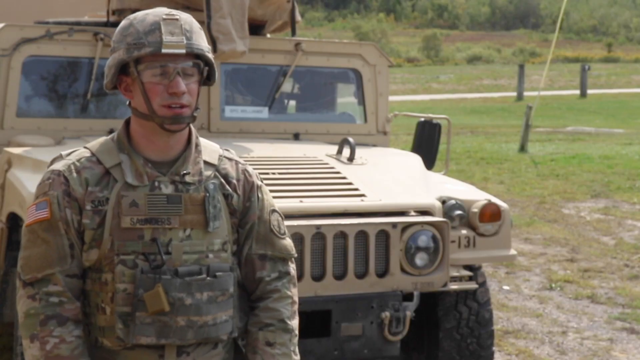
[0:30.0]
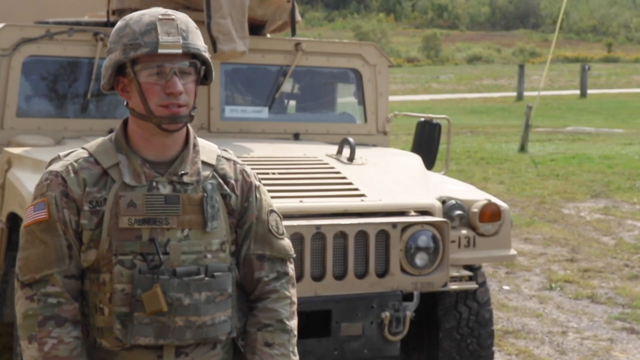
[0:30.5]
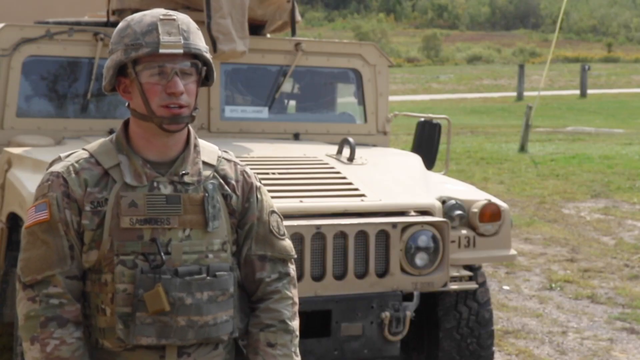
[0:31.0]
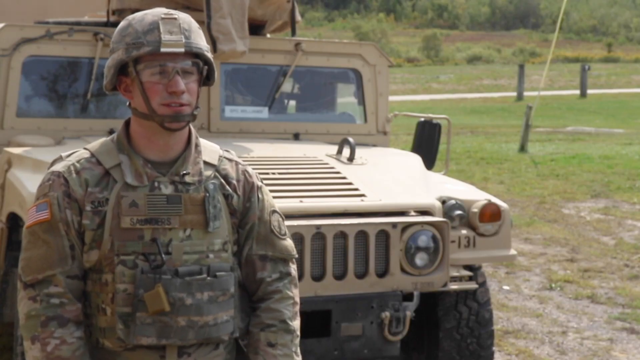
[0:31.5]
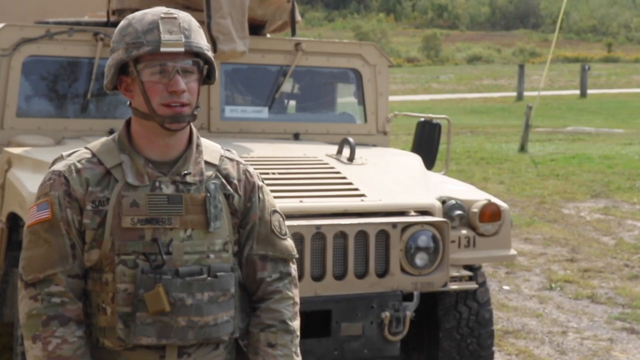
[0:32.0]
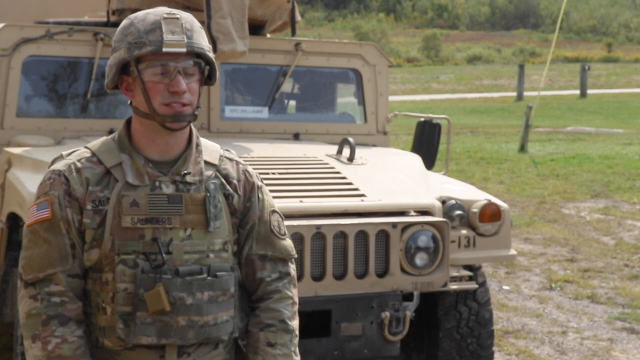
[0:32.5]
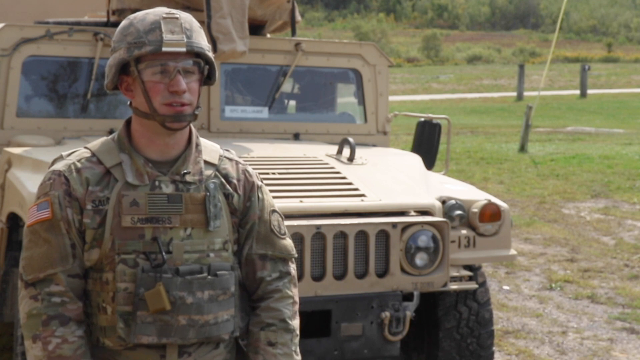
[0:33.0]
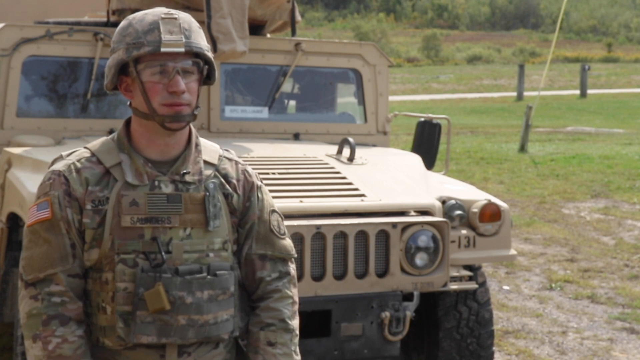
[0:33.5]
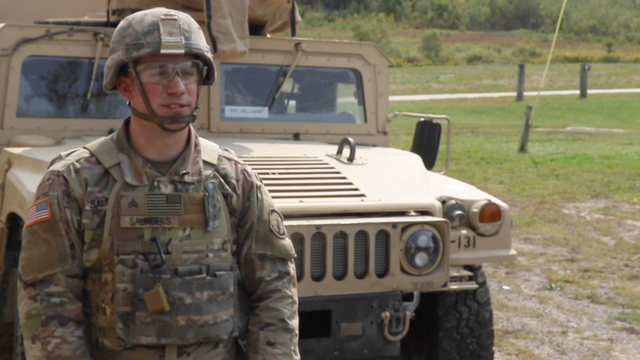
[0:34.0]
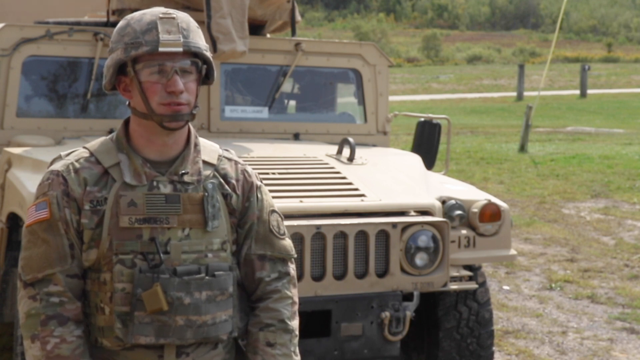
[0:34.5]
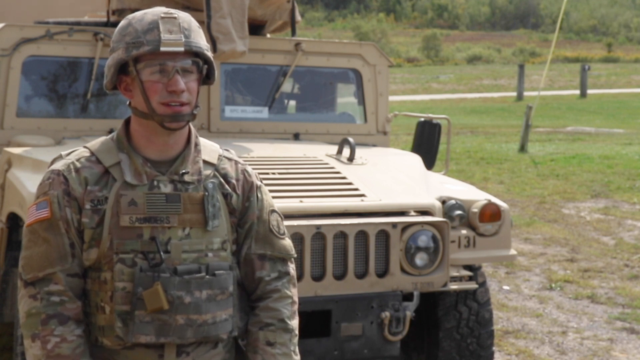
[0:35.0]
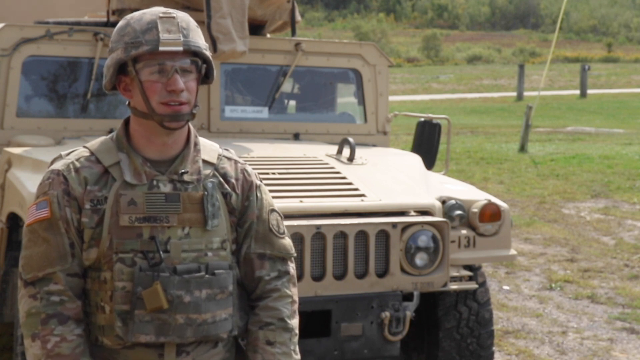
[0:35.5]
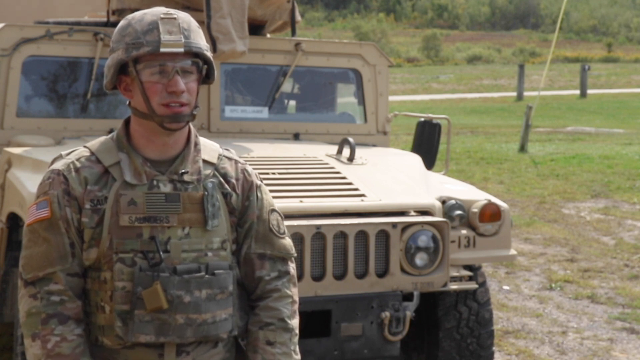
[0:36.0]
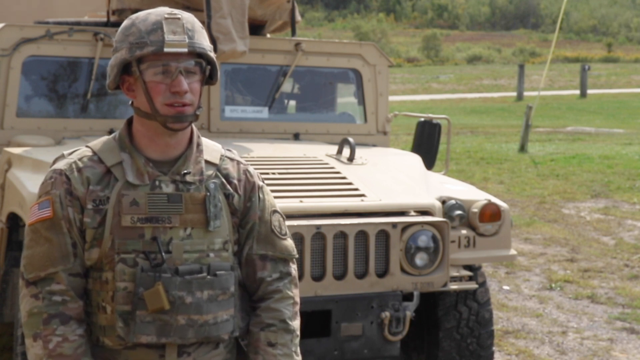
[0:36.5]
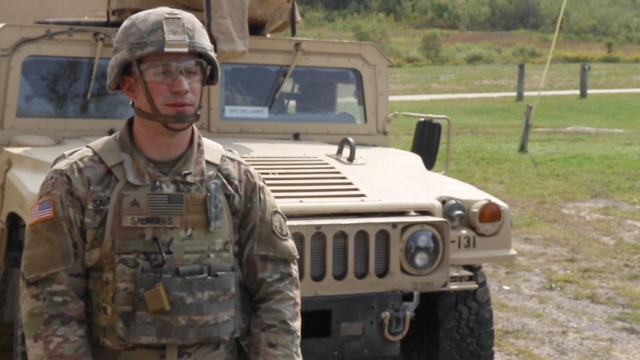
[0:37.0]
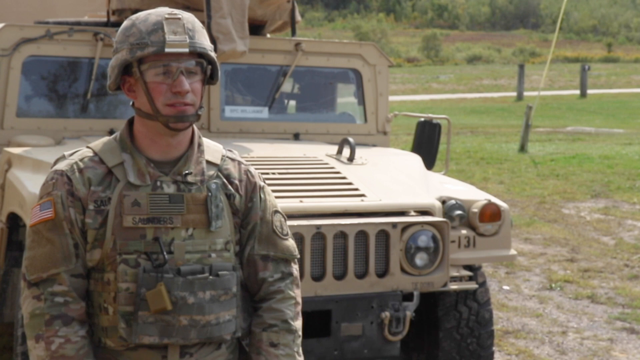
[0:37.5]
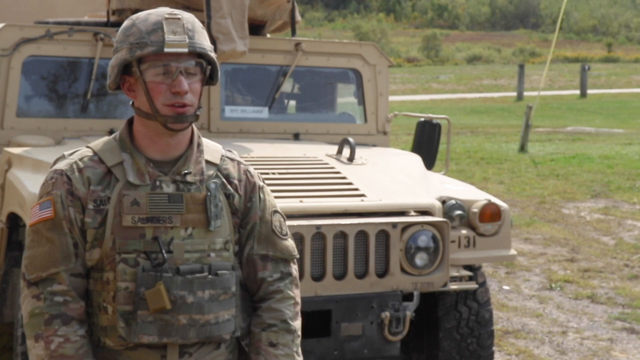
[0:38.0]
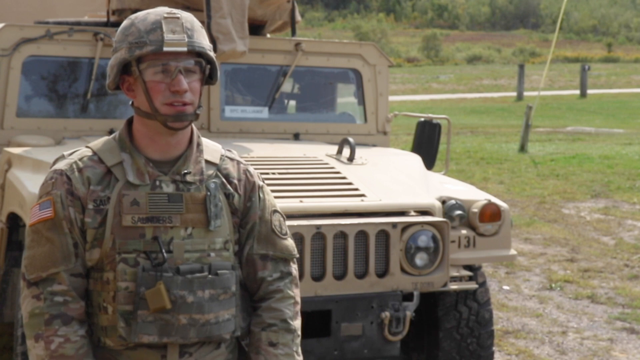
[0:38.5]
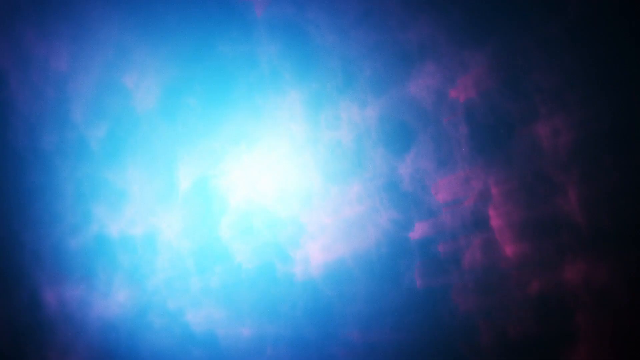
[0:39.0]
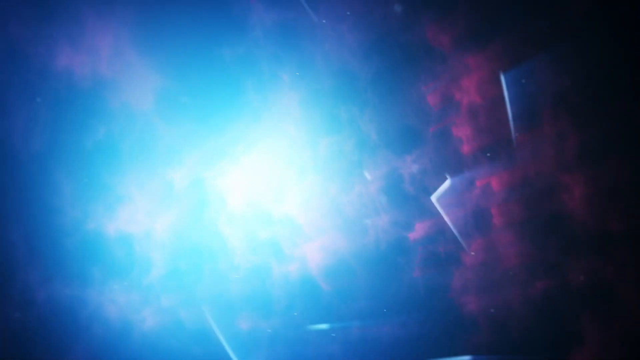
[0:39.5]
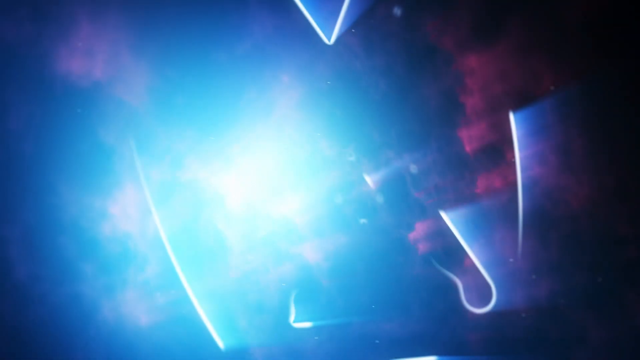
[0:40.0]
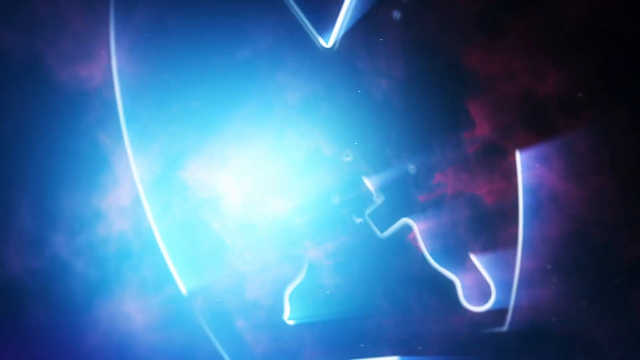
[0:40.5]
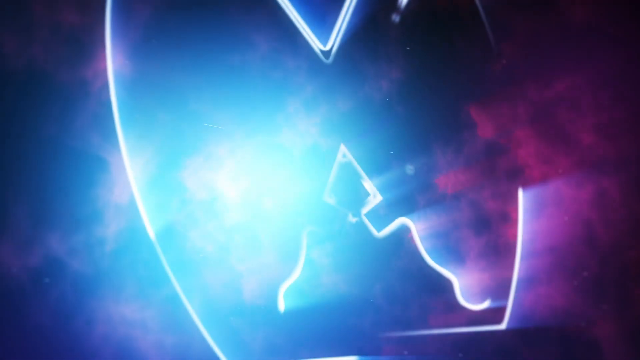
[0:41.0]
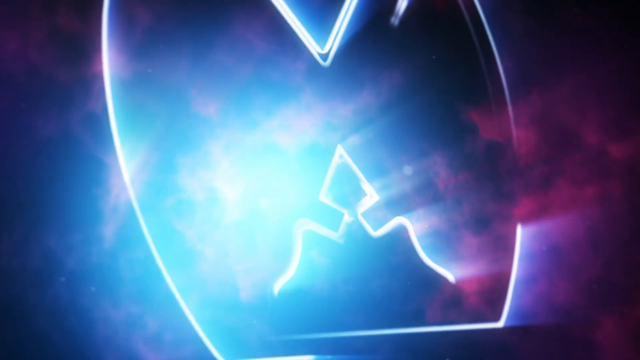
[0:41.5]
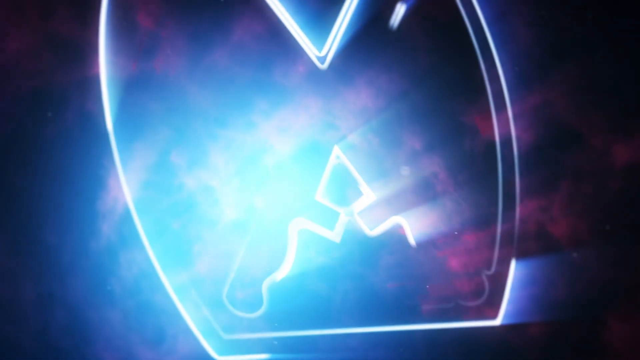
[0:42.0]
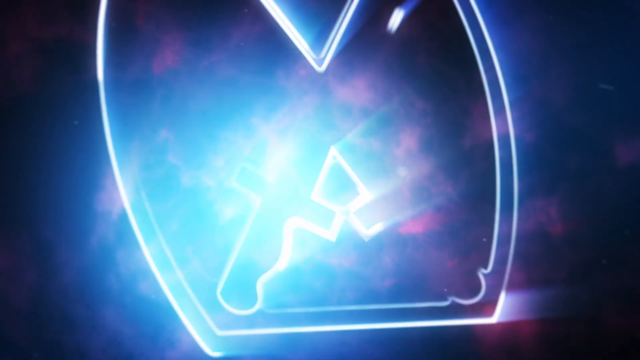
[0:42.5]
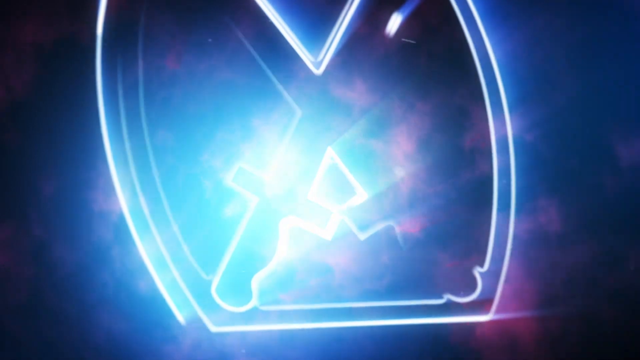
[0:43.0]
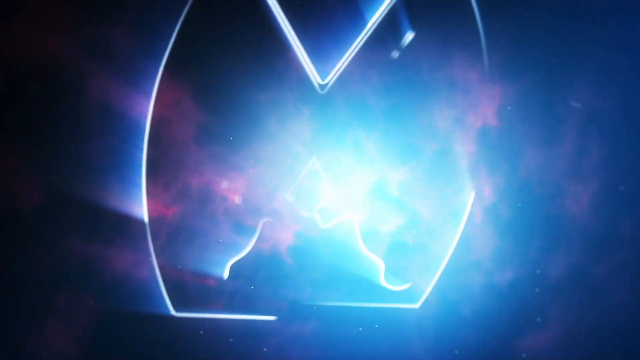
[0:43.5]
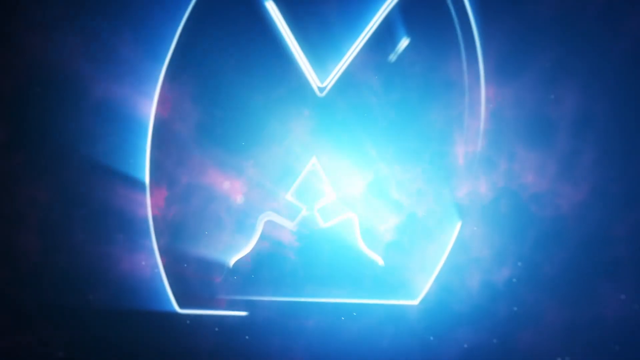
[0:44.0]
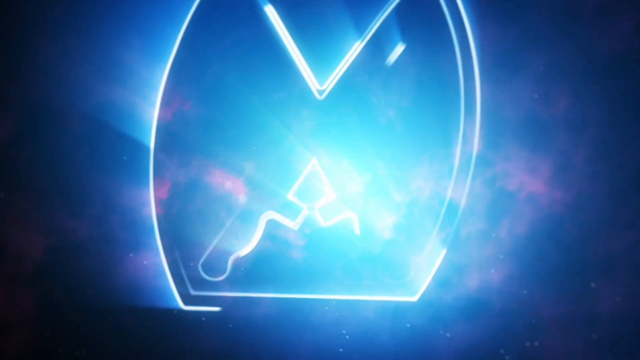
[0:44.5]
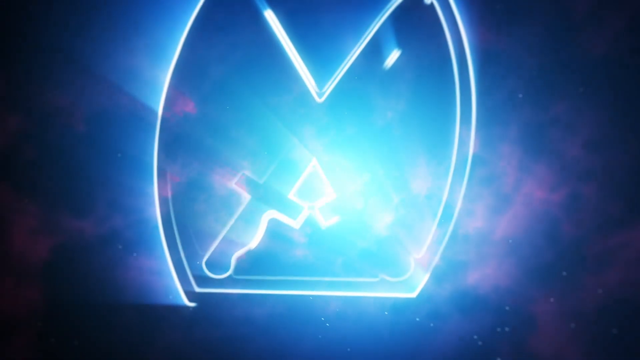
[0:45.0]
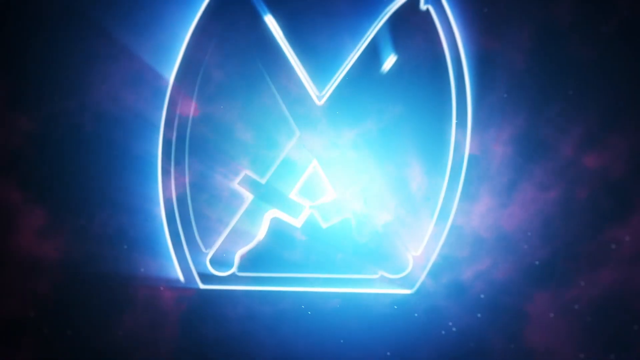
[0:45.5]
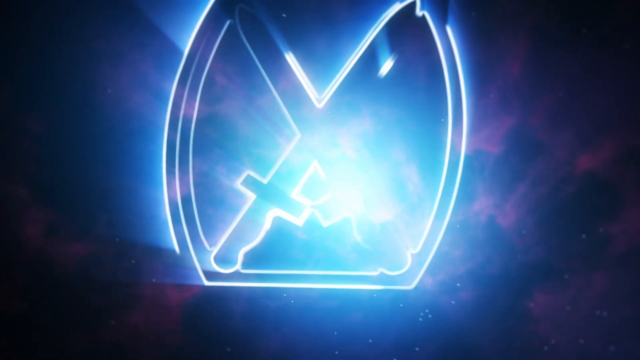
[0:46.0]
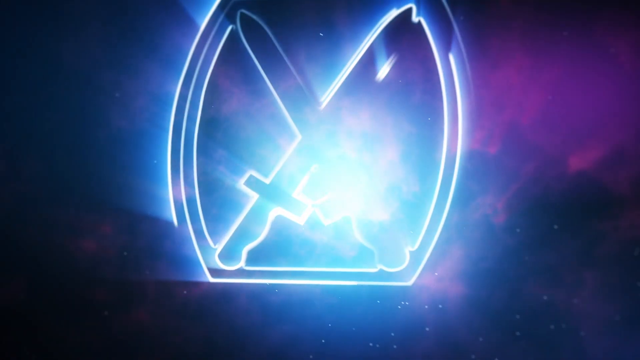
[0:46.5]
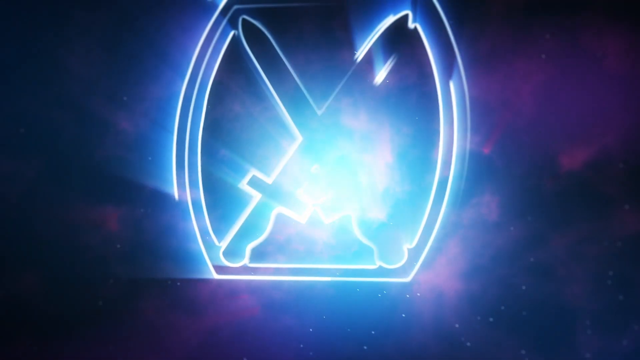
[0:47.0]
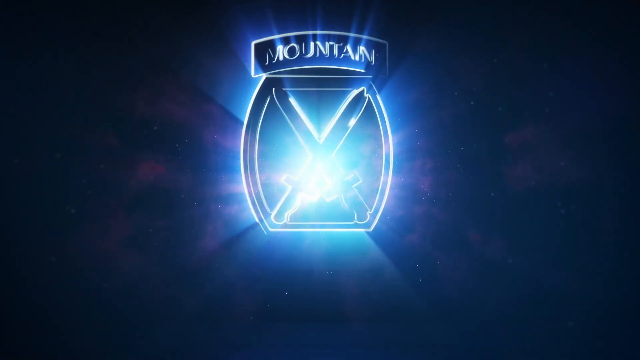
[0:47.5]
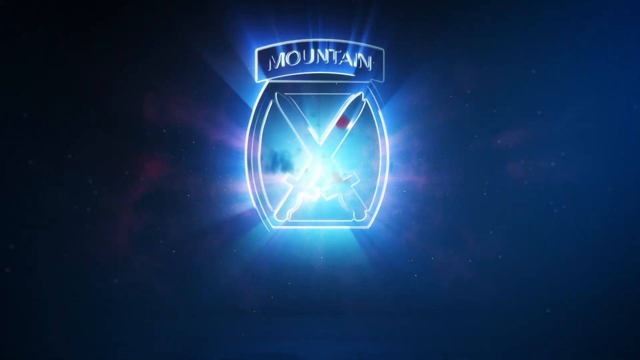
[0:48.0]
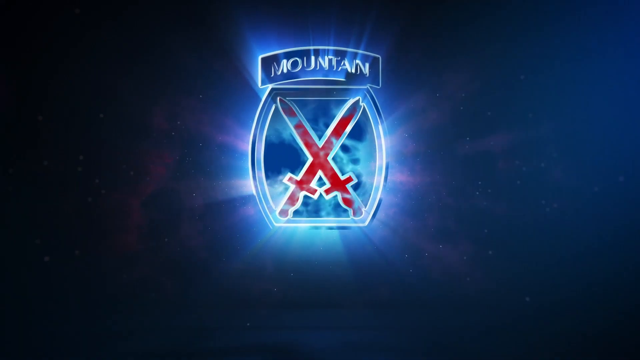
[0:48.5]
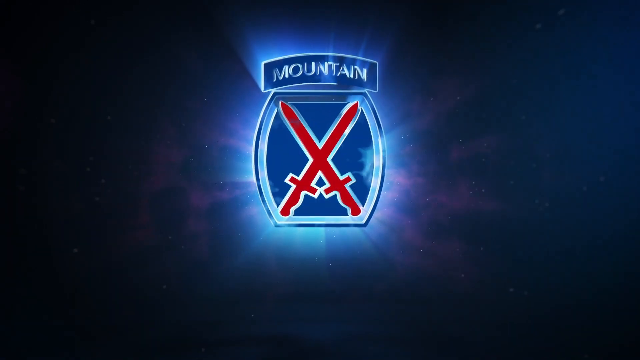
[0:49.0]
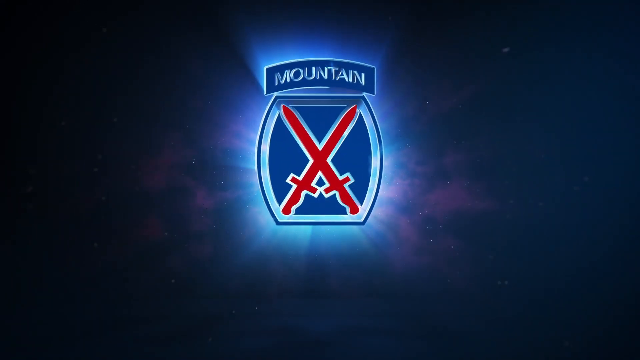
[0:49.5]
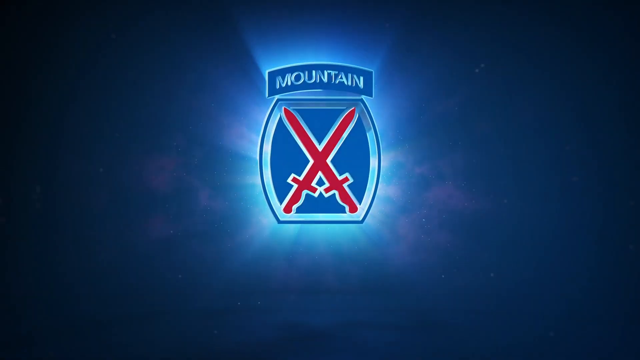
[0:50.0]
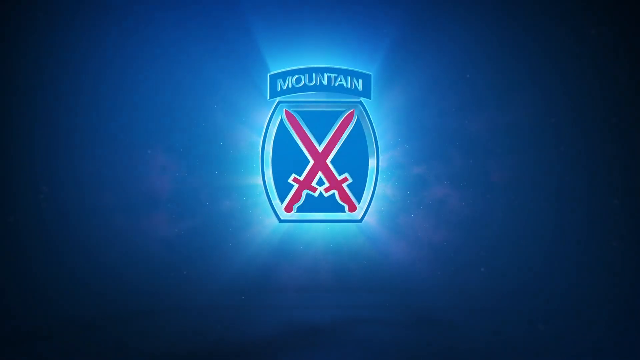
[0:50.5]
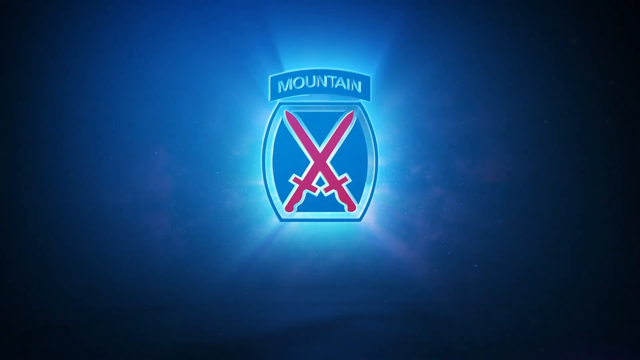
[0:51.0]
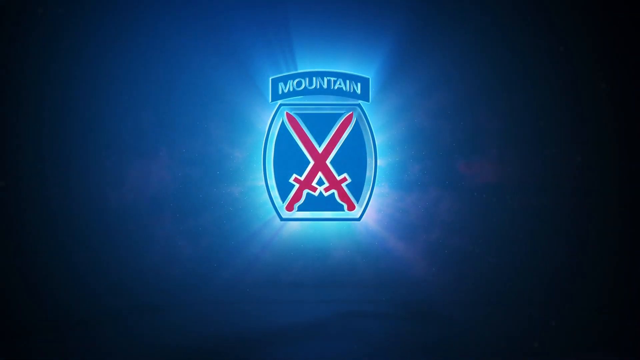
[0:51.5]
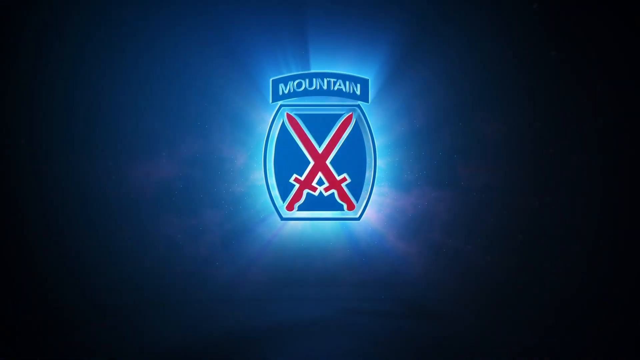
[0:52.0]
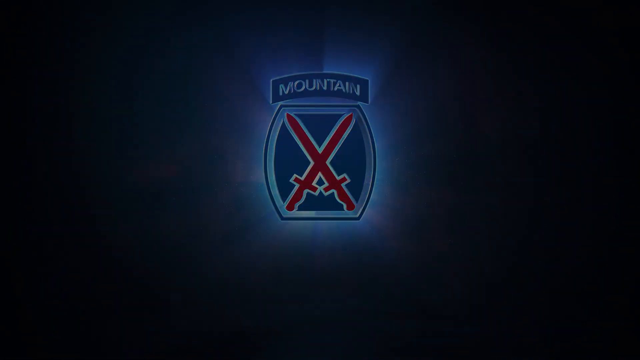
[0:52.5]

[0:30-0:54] A member of the military in camouflaged fatigues, a helmet and protective clear glasses is being interviewed in front of a tan Humvee in a field of some sort. Toward the end, an emblem appears: something like a shield with two red swords crossing side by side and a mountain over it. The video seems to be military-produced, though this is uncertain.